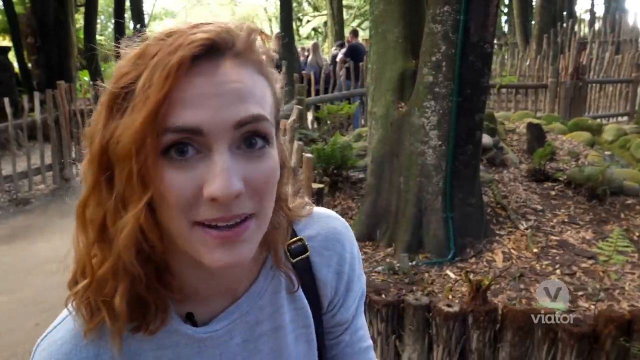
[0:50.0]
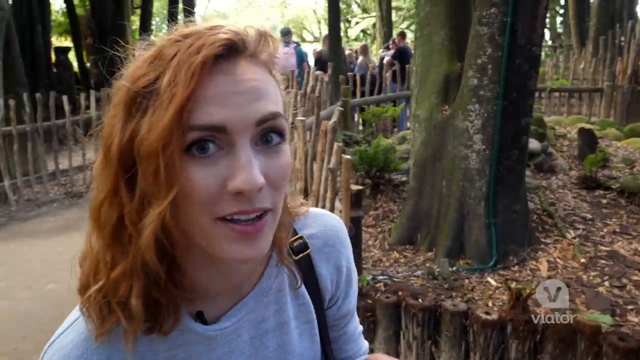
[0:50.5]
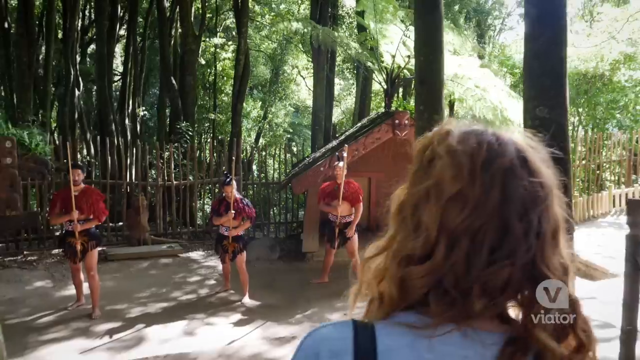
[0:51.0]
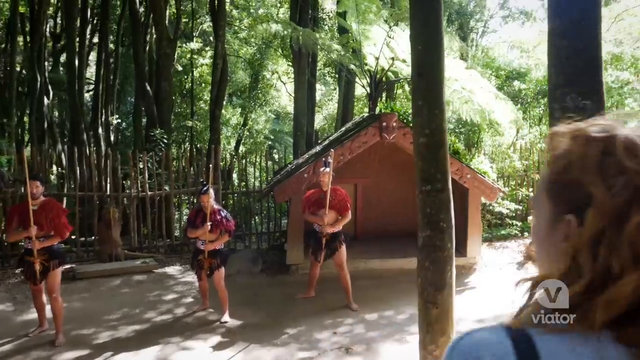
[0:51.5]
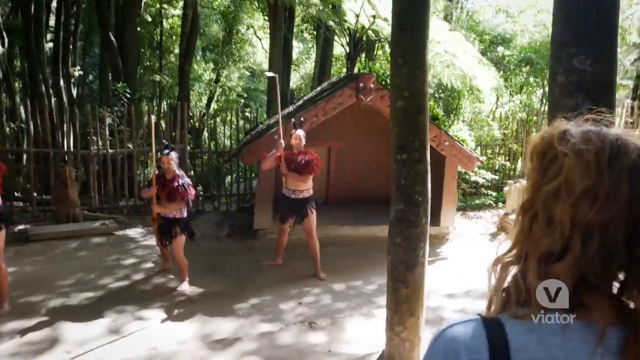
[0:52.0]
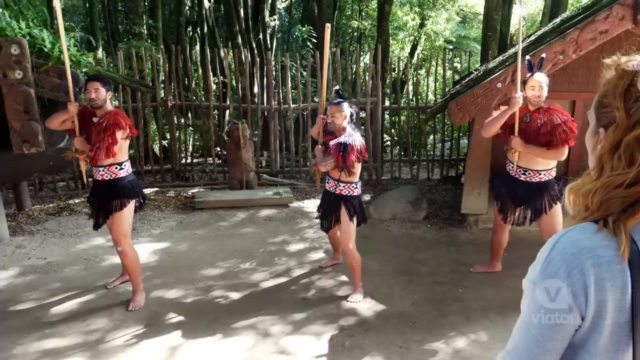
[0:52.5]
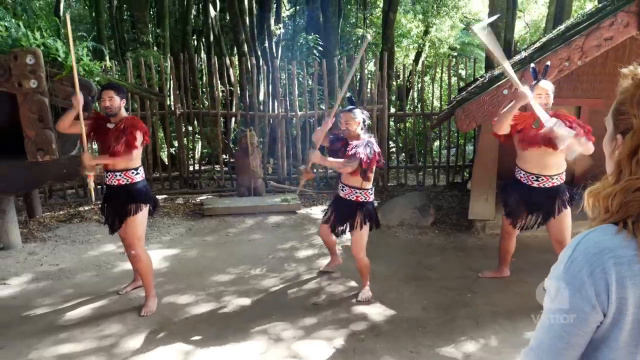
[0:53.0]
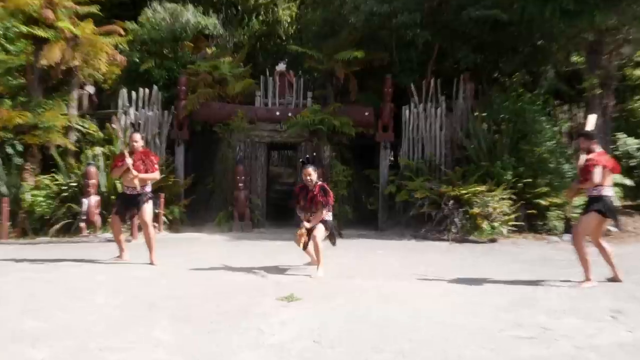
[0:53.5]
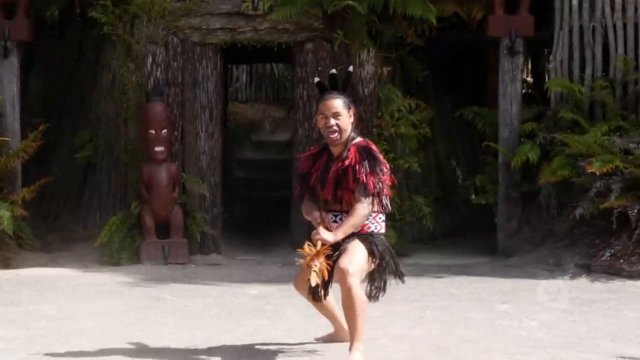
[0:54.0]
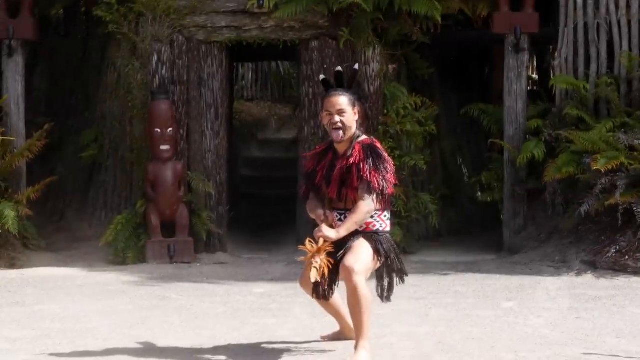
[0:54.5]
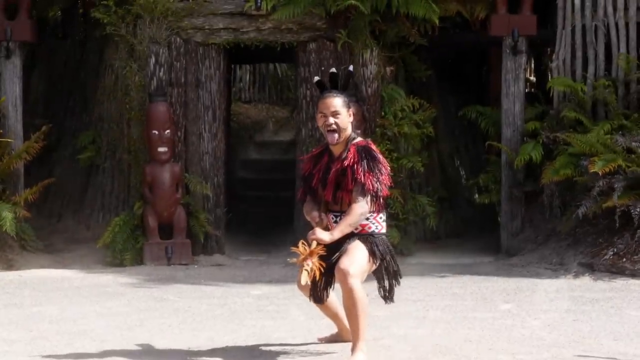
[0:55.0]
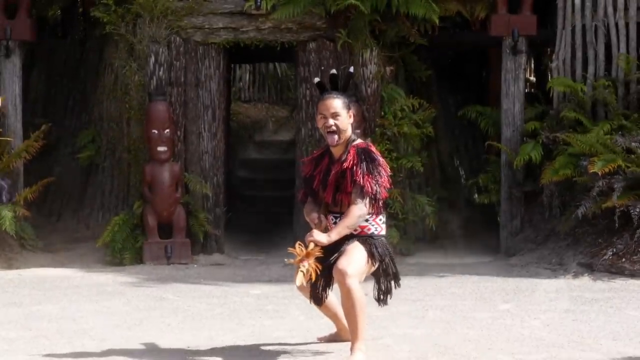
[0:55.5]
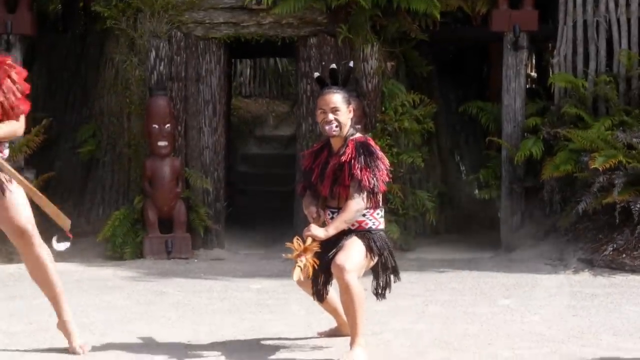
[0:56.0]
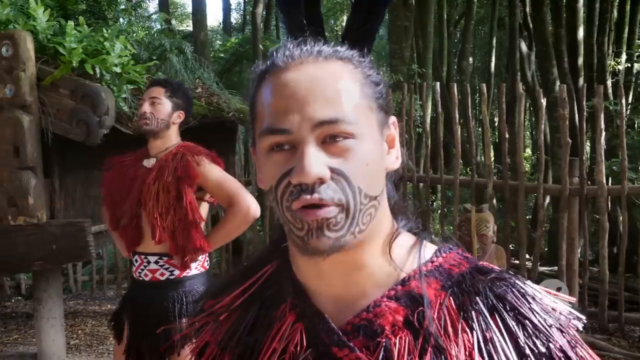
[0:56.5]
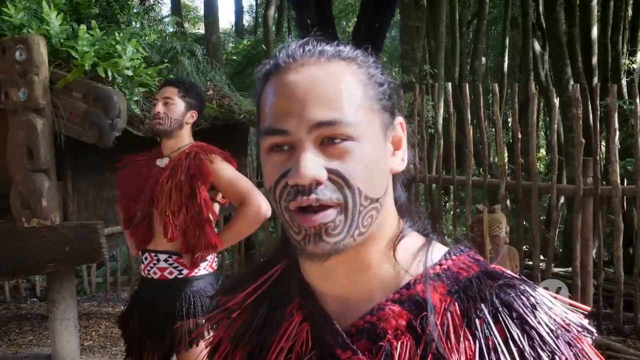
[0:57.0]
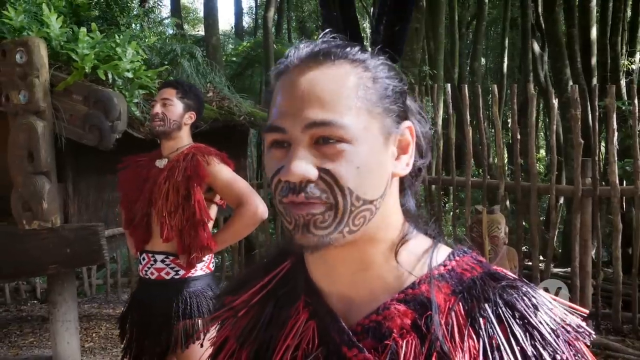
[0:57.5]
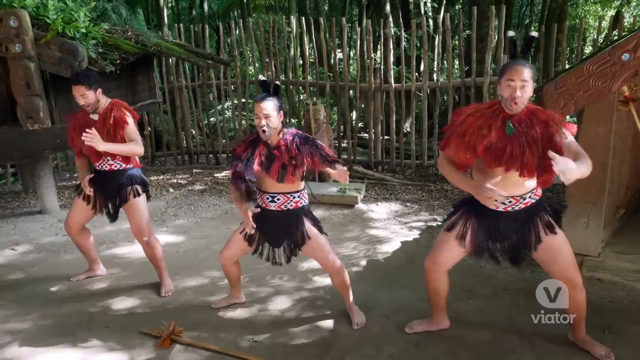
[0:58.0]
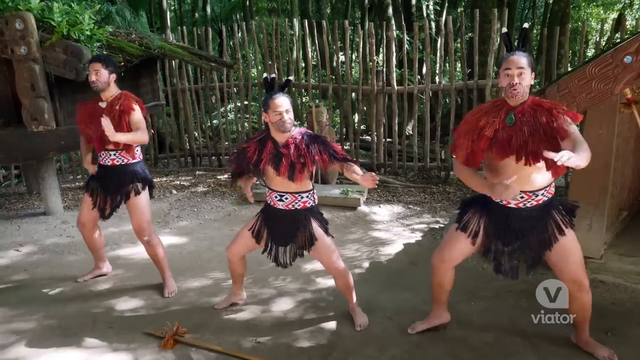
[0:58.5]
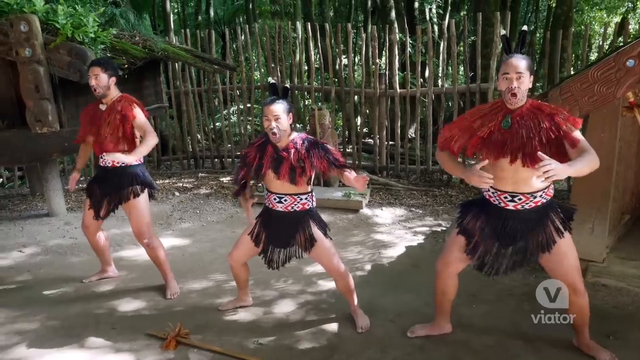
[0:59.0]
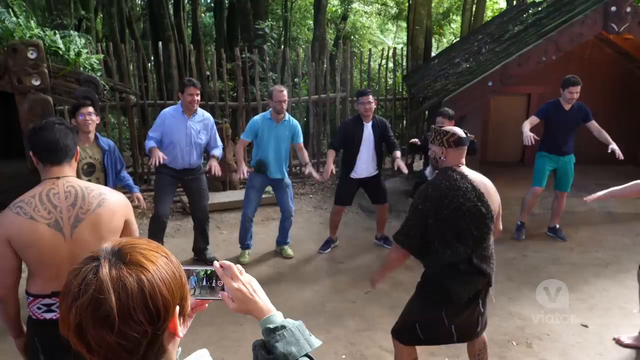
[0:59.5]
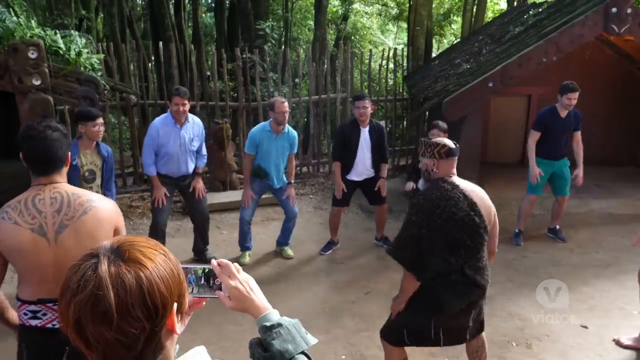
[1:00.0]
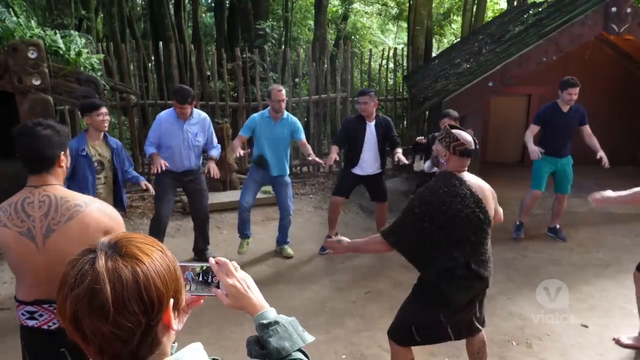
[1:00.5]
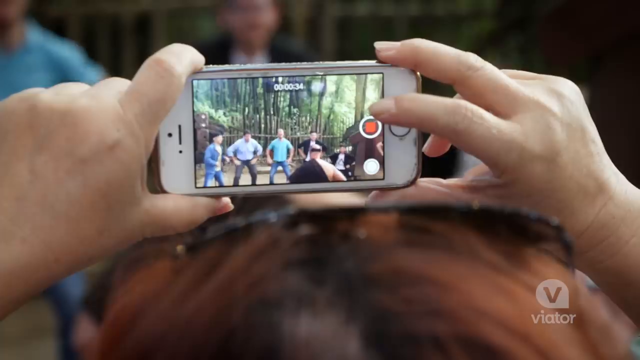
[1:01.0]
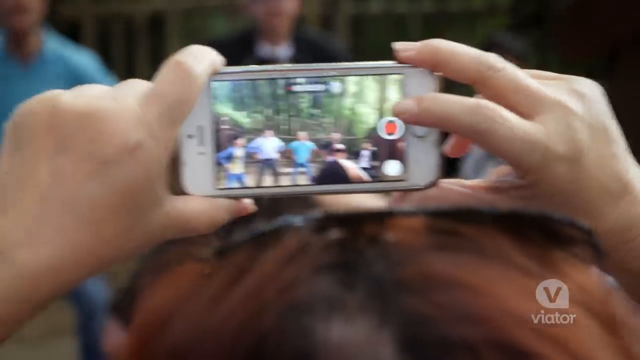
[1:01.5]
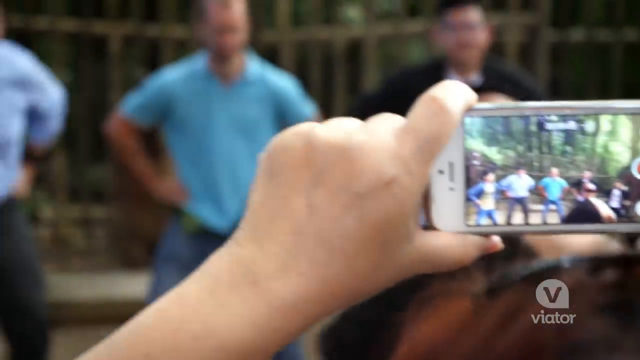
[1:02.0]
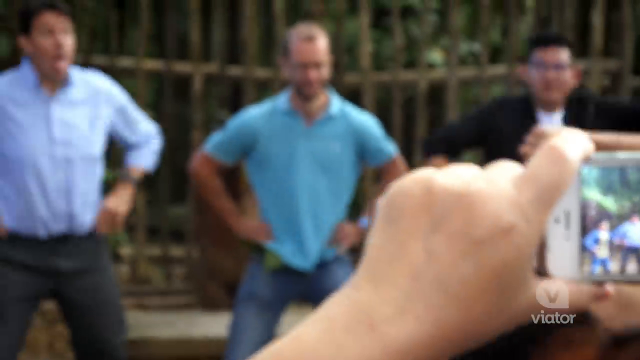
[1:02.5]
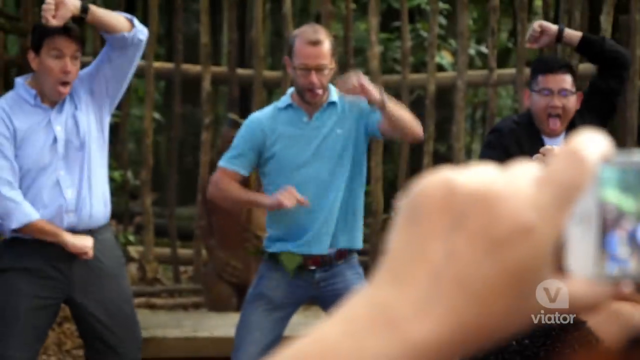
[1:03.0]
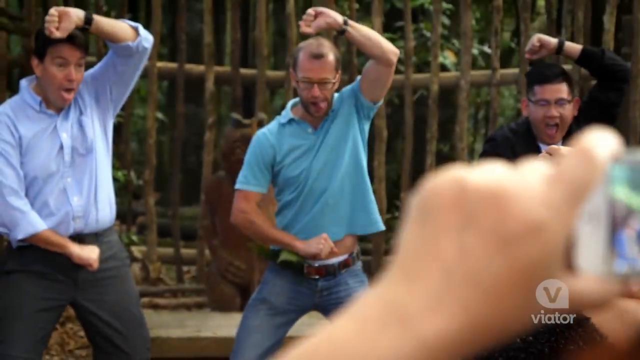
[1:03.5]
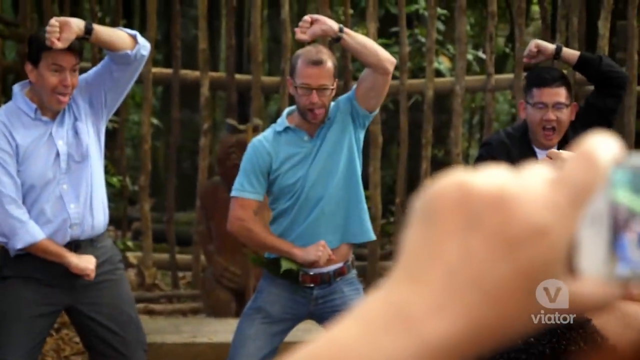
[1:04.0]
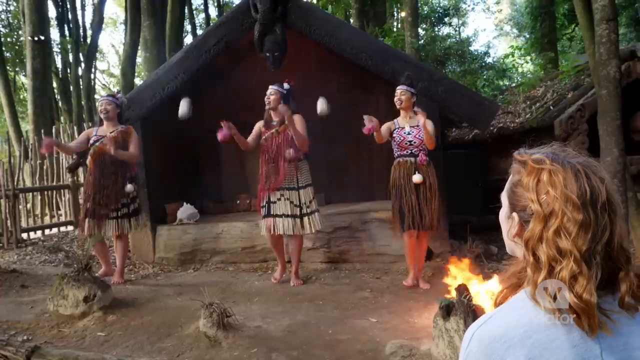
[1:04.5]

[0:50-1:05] The woman talks to the camera and walks, and then three men do a stick display. One of the Native men, who has a black ink design on his face, talks to the camera, and the shot pans out to the three men dancing. A group of white spectators, apparently about five men, try to do the dance, mimicking a Native man who teaches them. Three women briefly appear swinging the balls on strings. The Natives wear red things on their necks, and the women wear dresses. The Native men appear to be chanting some type of chant while they dance.